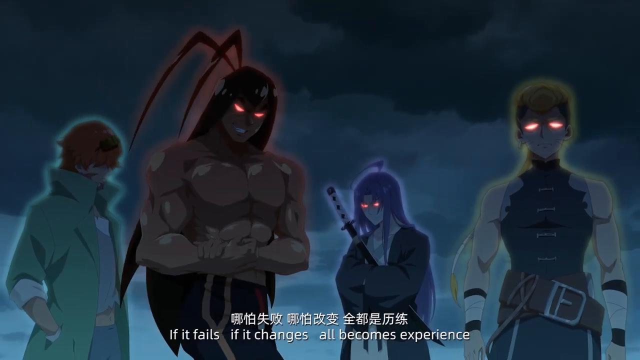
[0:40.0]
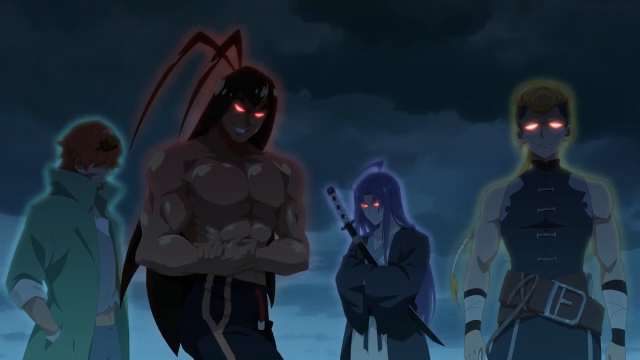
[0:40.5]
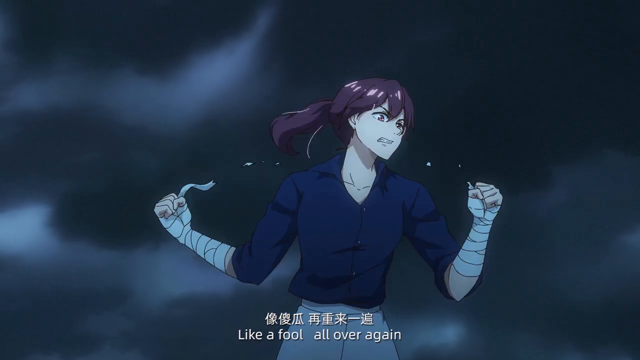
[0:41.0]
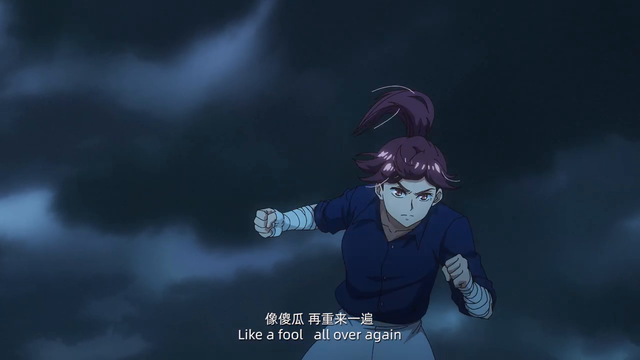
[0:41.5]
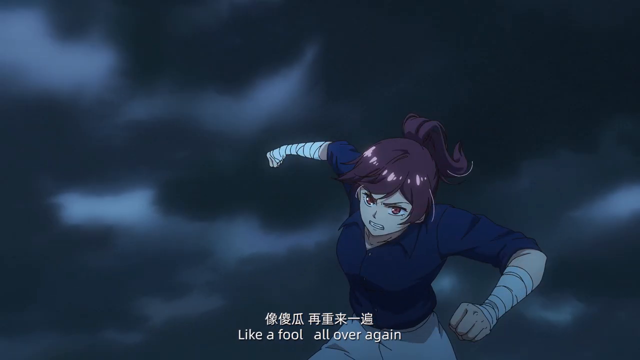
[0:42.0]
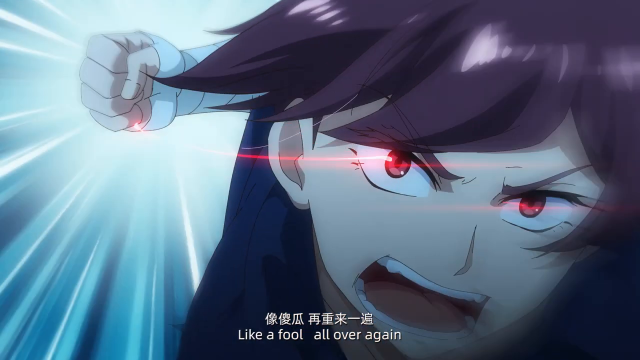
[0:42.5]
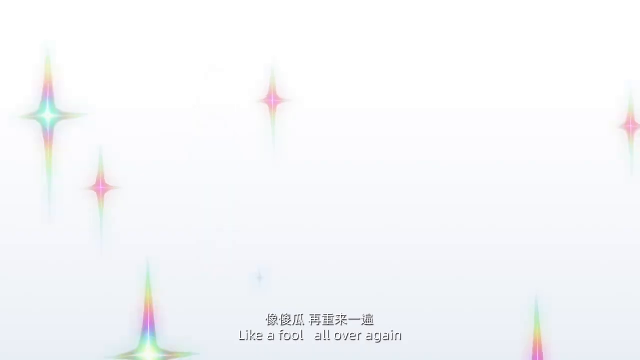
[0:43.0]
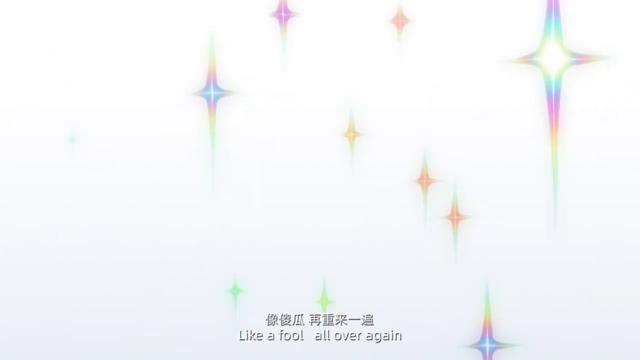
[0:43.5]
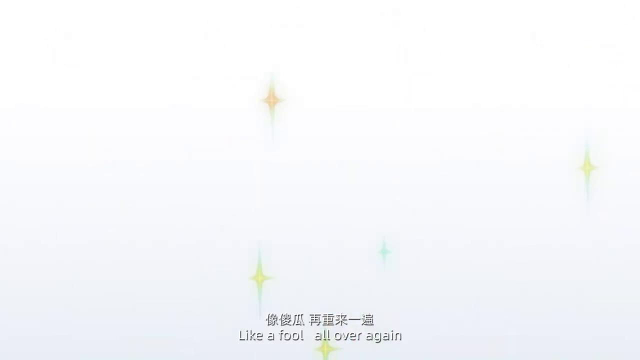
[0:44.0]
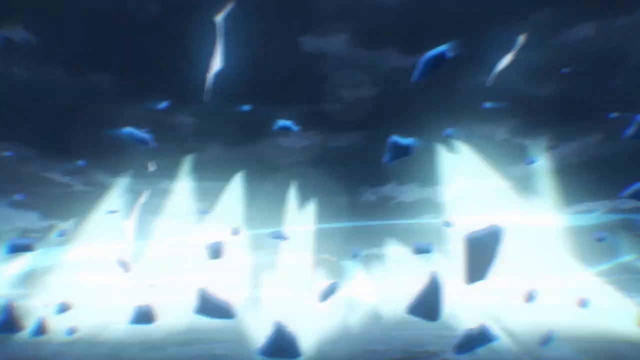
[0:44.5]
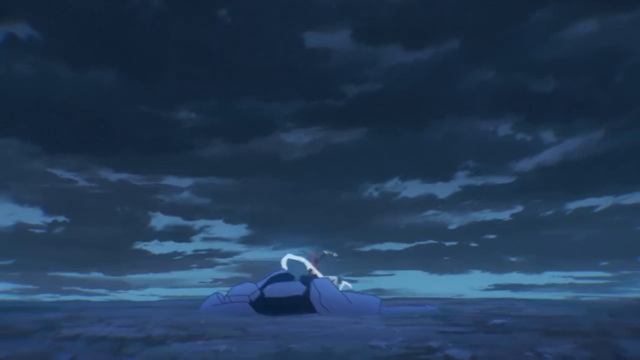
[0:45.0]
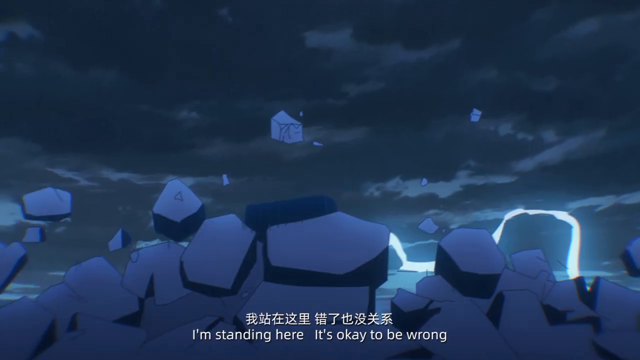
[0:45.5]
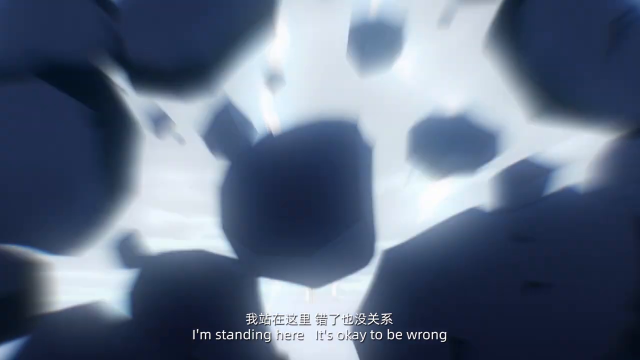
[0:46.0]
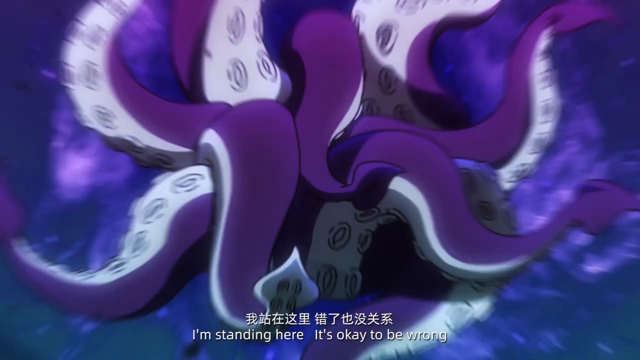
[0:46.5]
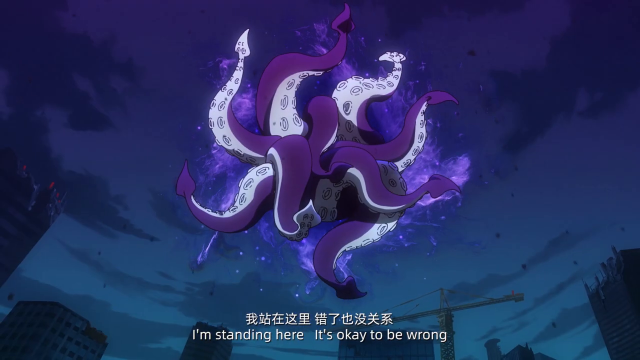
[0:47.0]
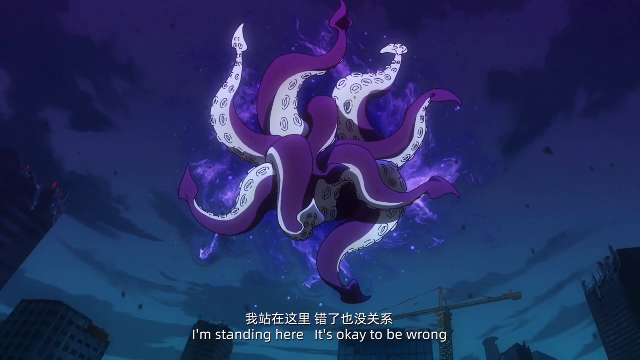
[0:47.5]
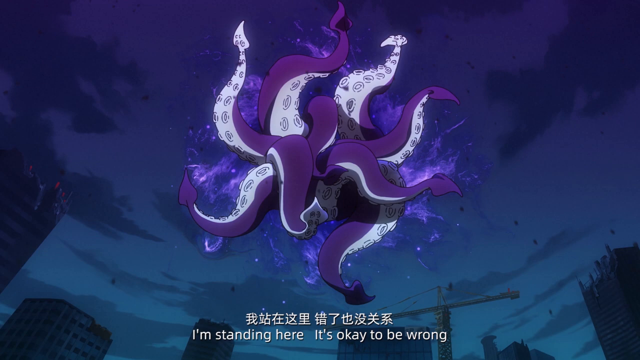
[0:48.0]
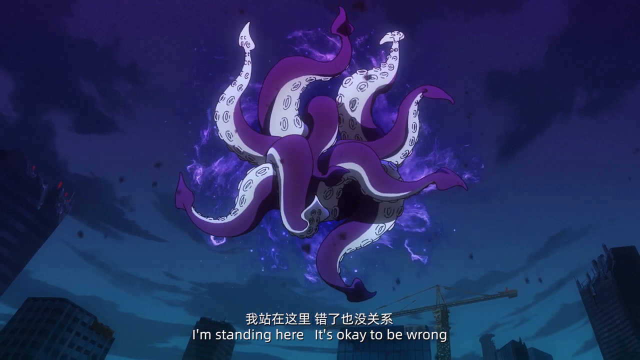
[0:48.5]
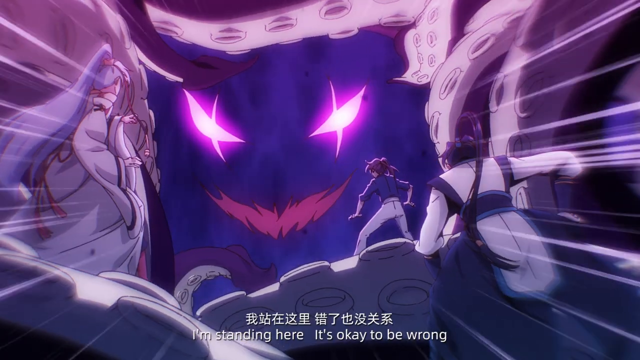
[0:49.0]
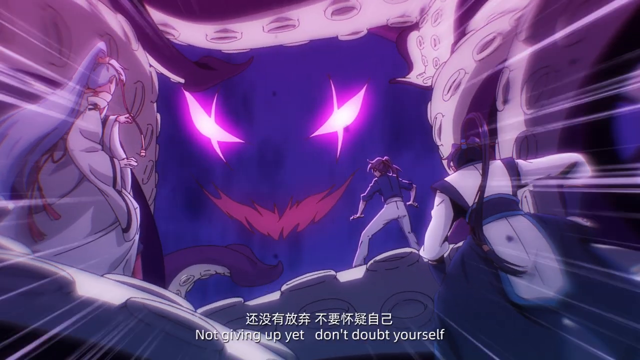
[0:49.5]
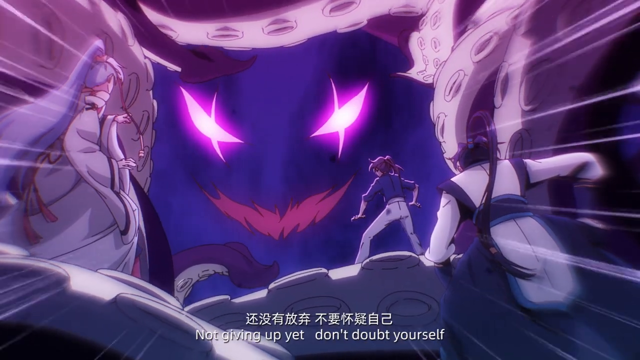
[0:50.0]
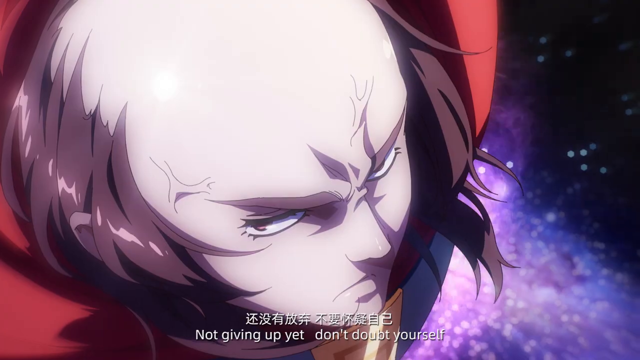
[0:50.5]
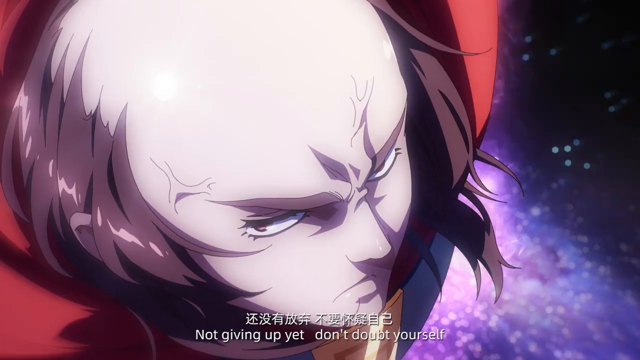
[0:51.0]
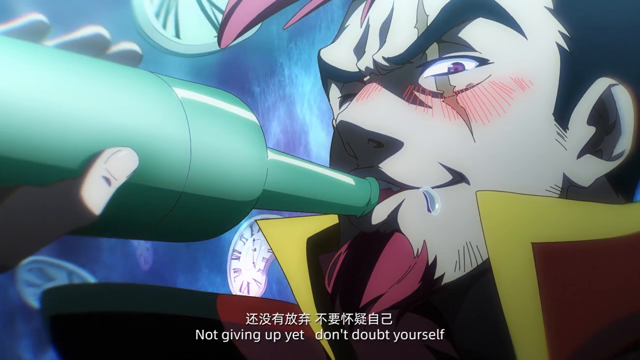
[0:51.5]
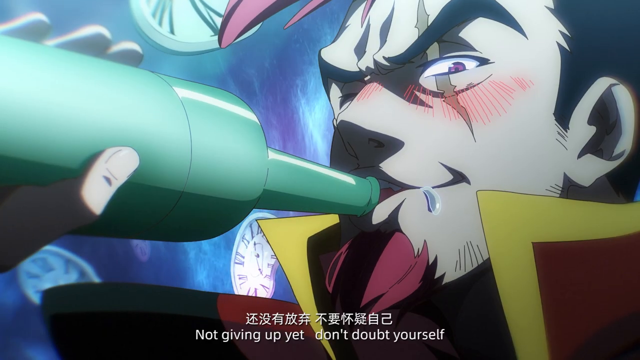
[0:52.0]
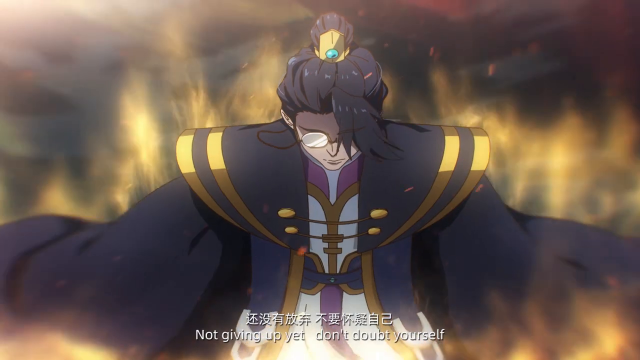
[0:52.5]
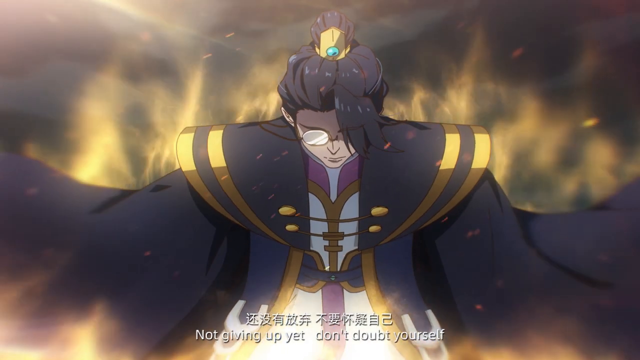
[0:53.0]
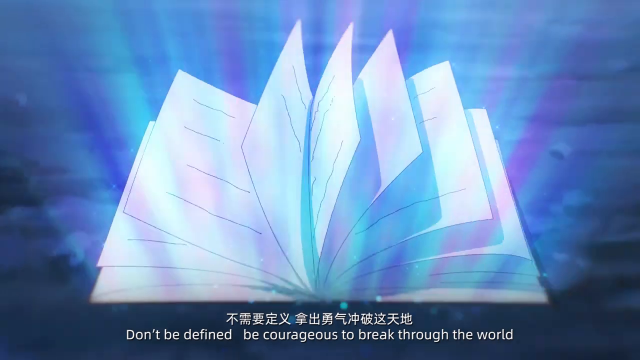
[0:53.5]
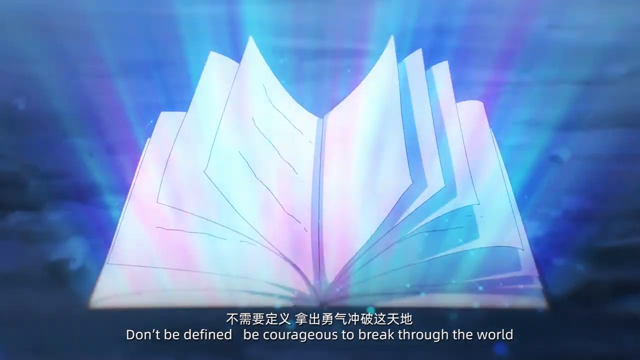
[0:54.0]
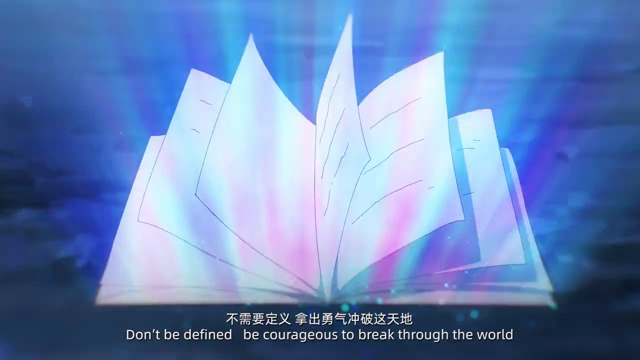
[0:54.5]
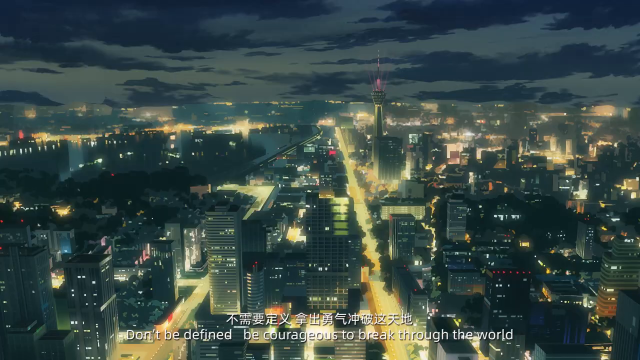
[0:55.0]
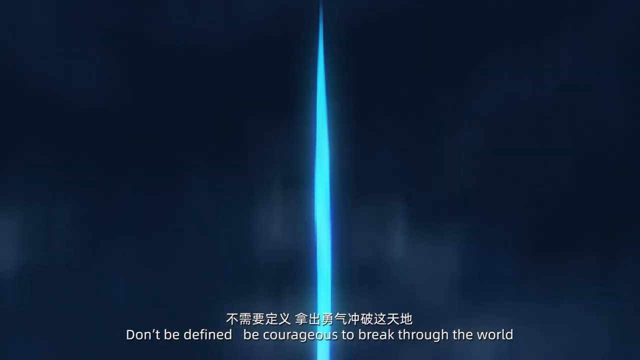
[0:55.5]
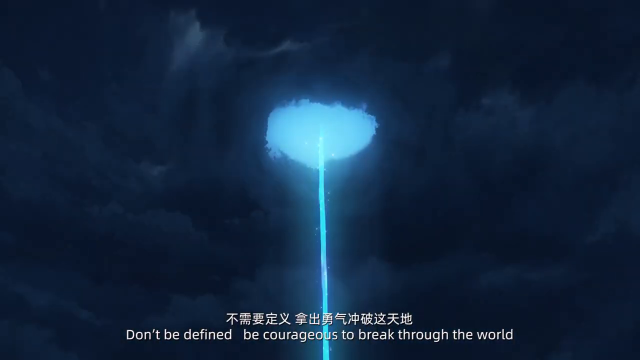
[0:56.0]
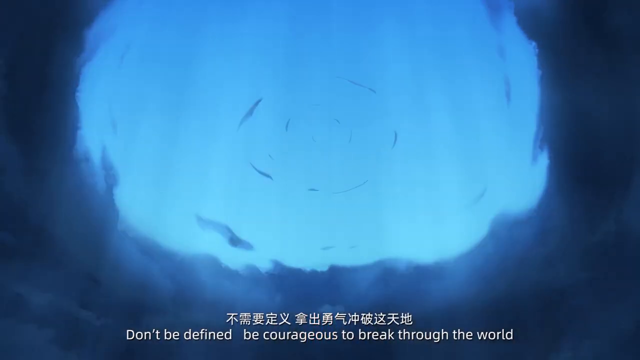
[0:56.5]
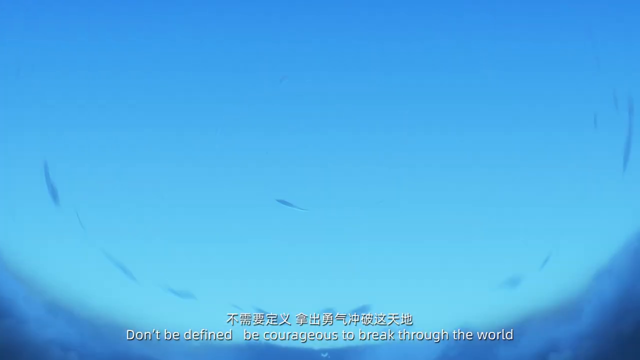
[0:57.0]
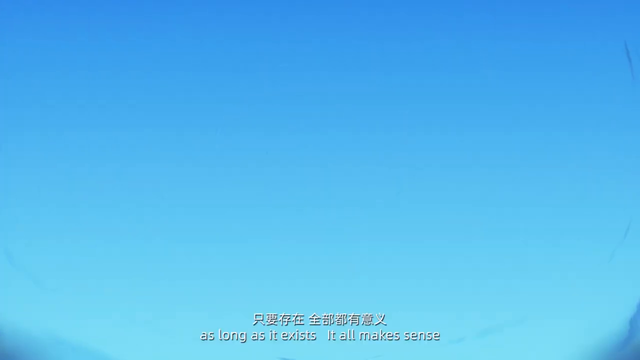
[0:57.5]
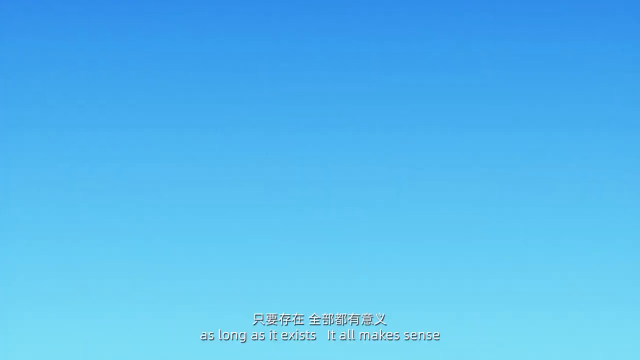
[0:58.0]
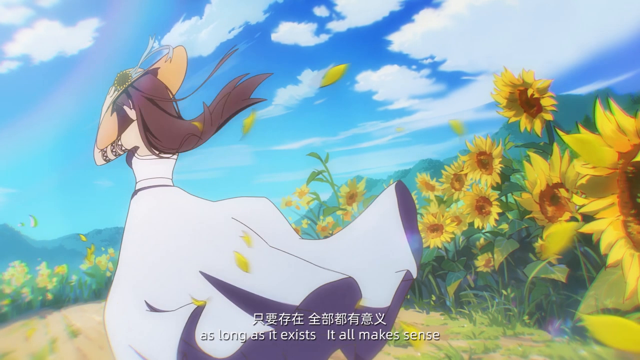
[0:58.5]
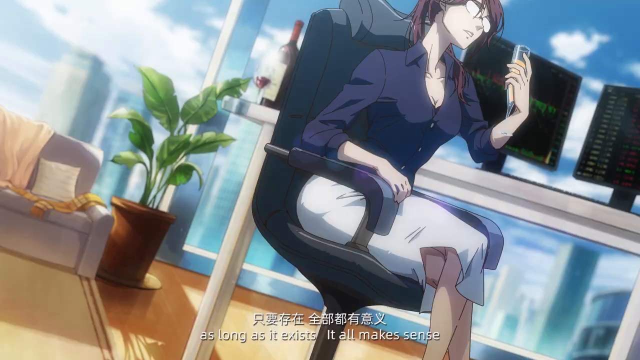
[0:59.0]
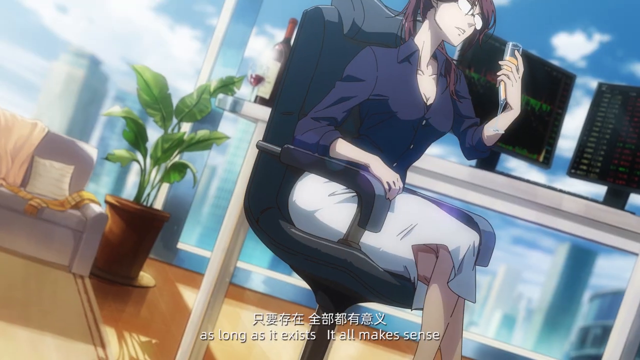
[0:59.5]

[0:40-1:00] In what looks like an anime opening theme, with occasional subtitles, a character in a blue short-sleeved top with taped-up arms and purple hair in a knot rips the tape a little with their teeth. A close-up of their fist follows, then a sparkling effect as if they had just punched the viewer. Several lightning bolts strike the ground at once, with energy coming out of the ground and bursting rocks upward. Purple tentacles appear in the sky with a slowly swirling purple energy effect behind them, and the view zooms in to reveal a very simple, evil-looking face within the cloud. A man looks angrily at the camera with a bulging vein on his head. A man with a red goatee and a yellow collared shirt drinks from a green bottle while several clocks fly up behind him. A man in a fancy jacket has his head down and looks like he has a monocle. A book flips its own pages. The city appears very briefly, with a bright blue beam rising from it into a blue cloud and exploding. Then a woman in a white sundress is in a sunflower field, followed by a woman in a blue shirt and a white skirt in an office setting.